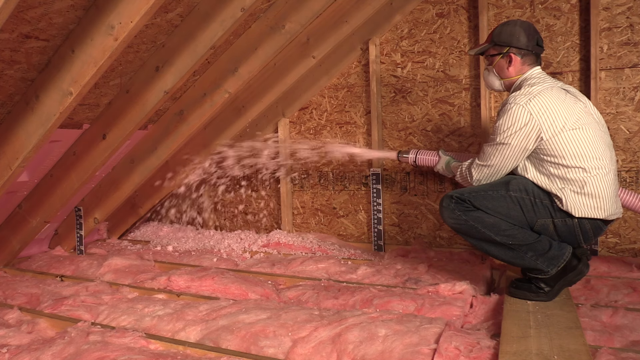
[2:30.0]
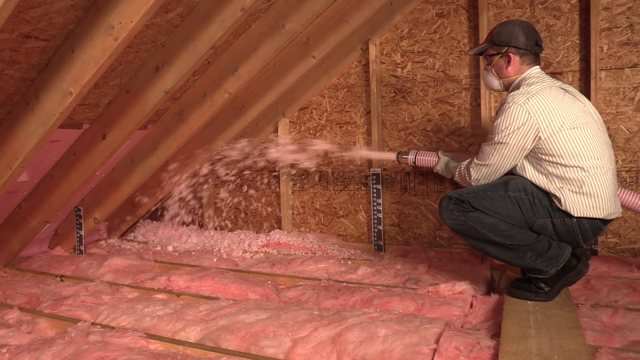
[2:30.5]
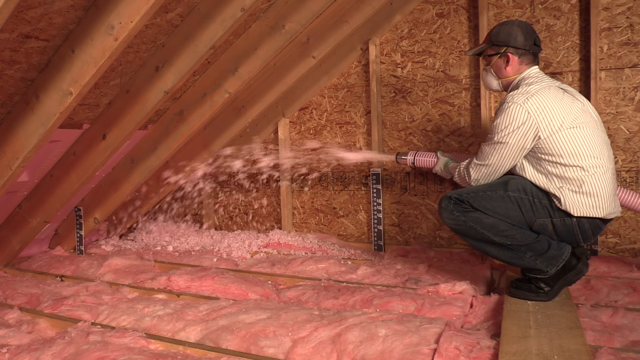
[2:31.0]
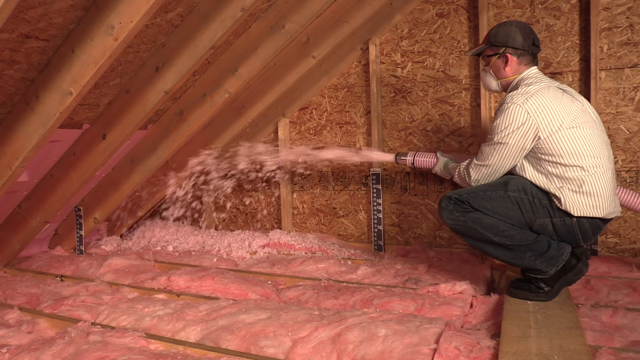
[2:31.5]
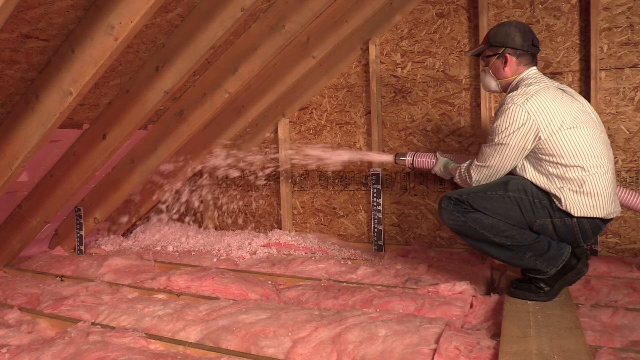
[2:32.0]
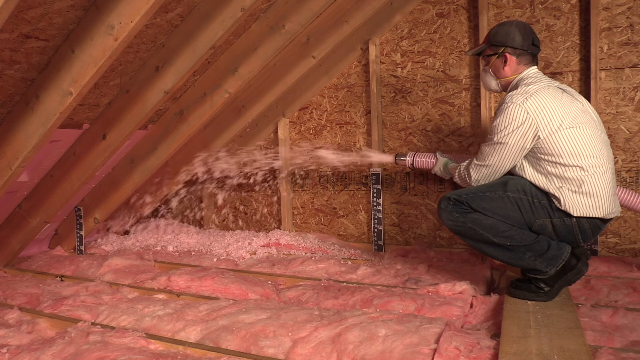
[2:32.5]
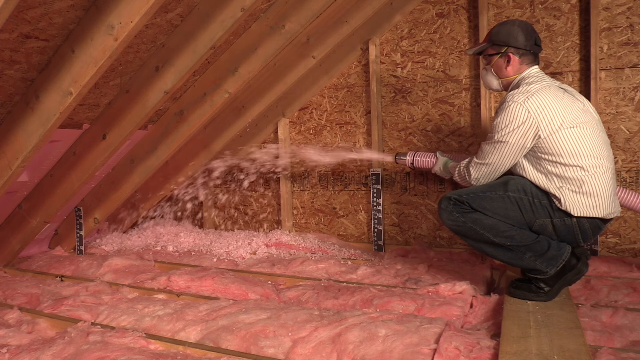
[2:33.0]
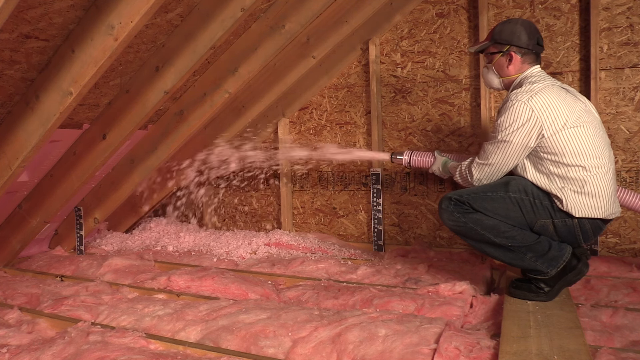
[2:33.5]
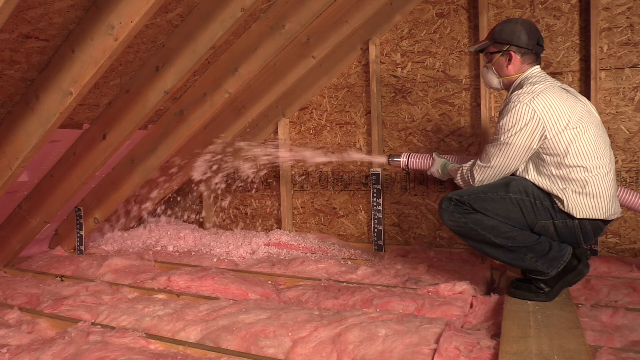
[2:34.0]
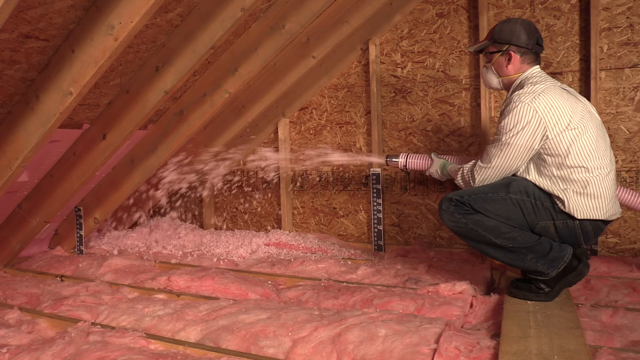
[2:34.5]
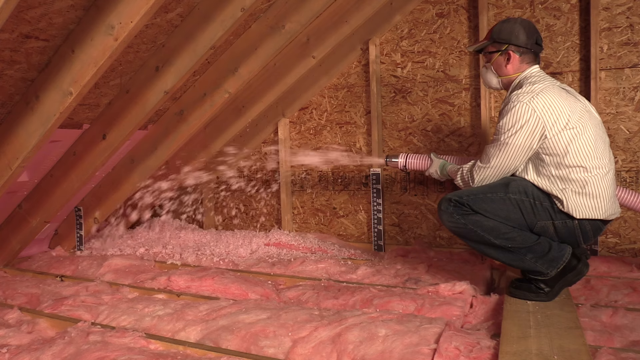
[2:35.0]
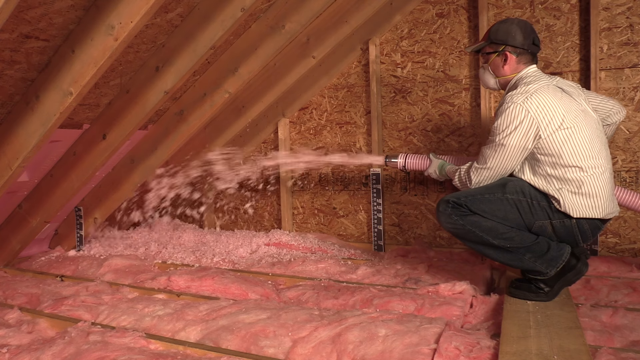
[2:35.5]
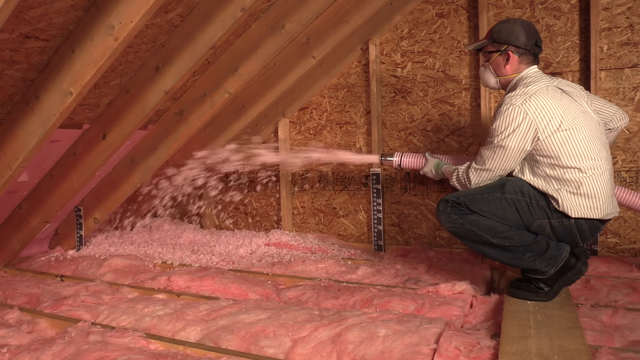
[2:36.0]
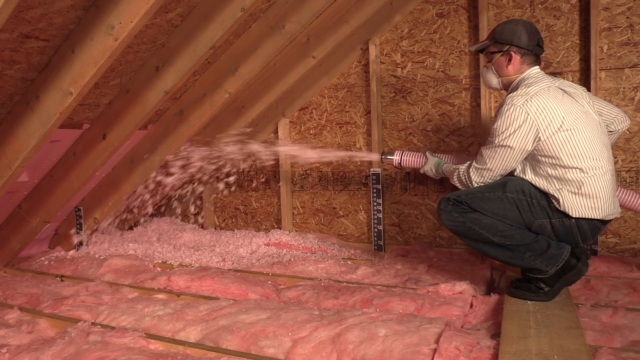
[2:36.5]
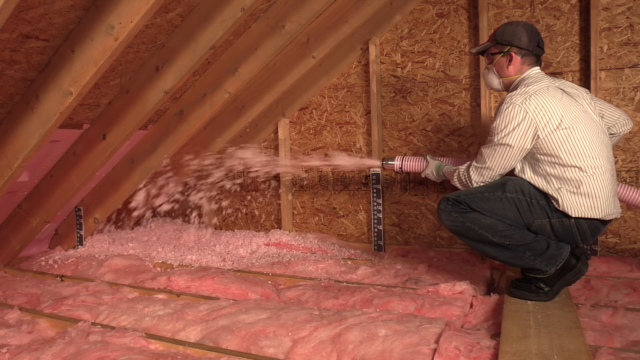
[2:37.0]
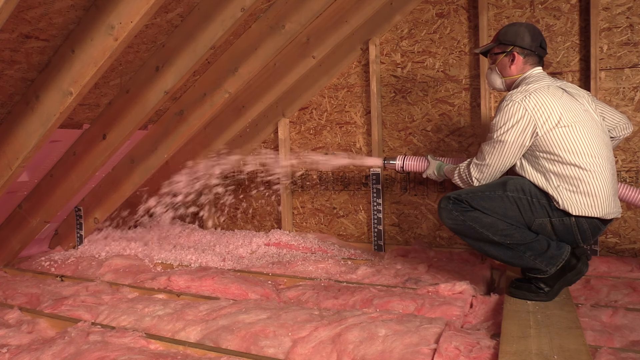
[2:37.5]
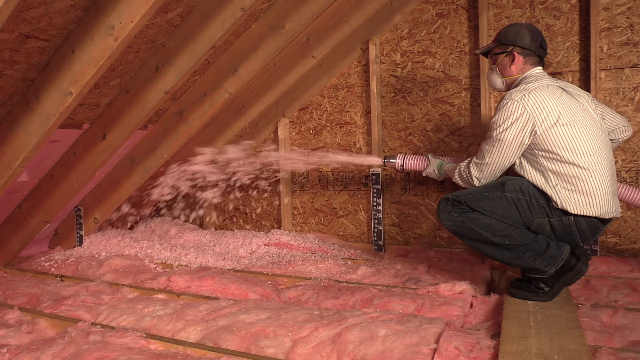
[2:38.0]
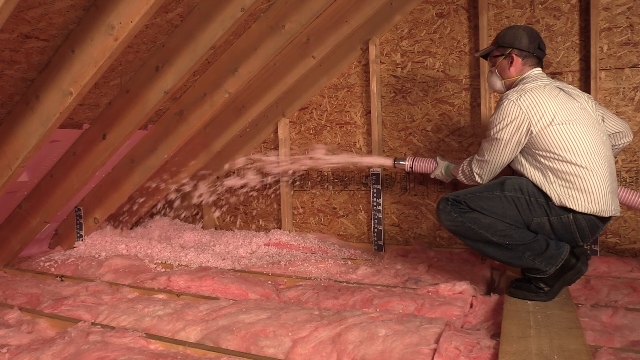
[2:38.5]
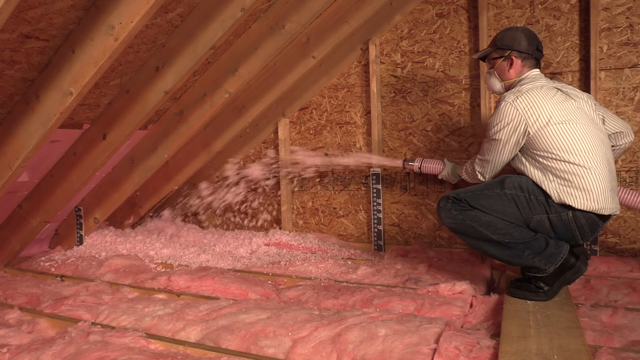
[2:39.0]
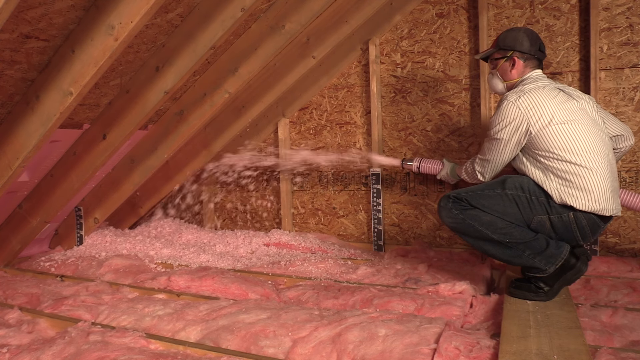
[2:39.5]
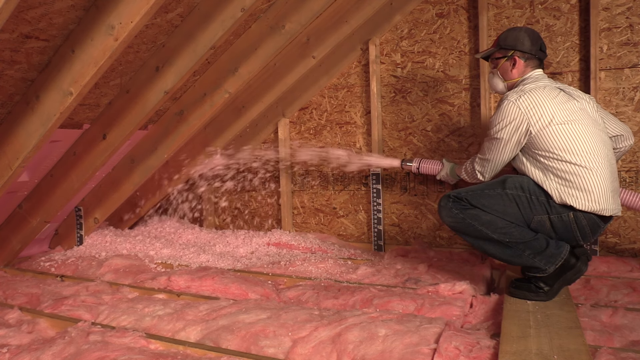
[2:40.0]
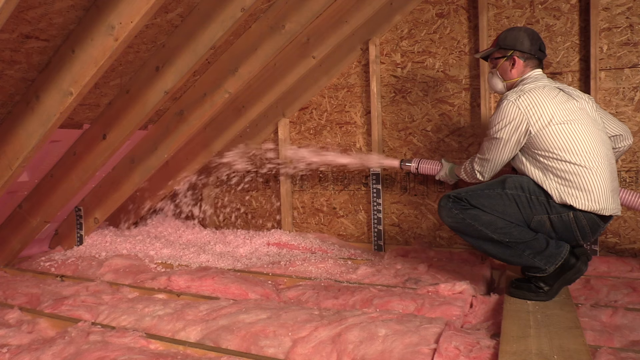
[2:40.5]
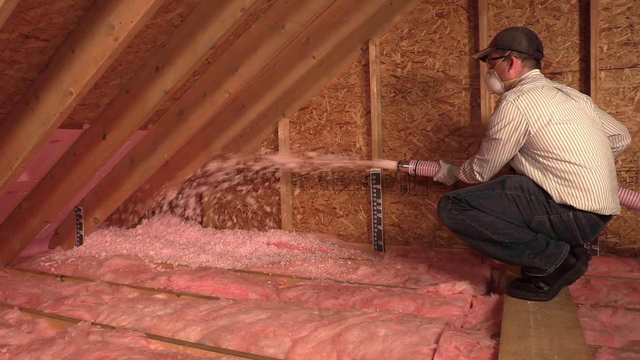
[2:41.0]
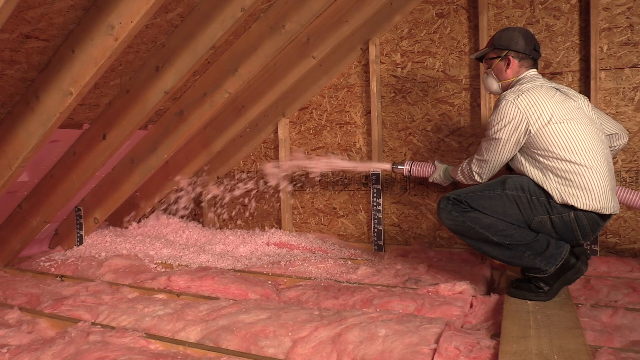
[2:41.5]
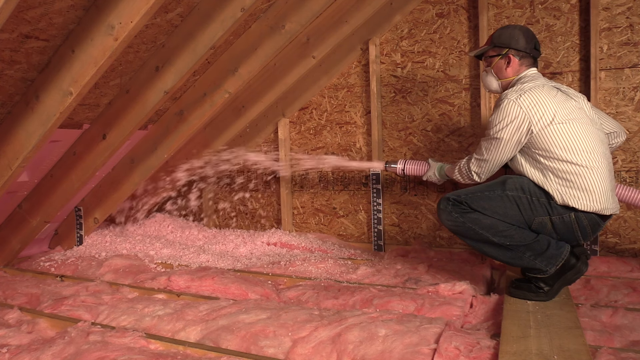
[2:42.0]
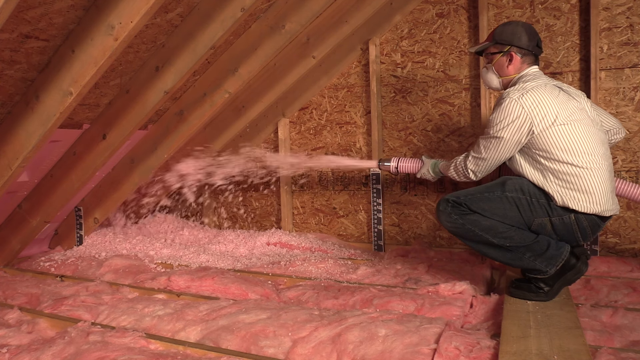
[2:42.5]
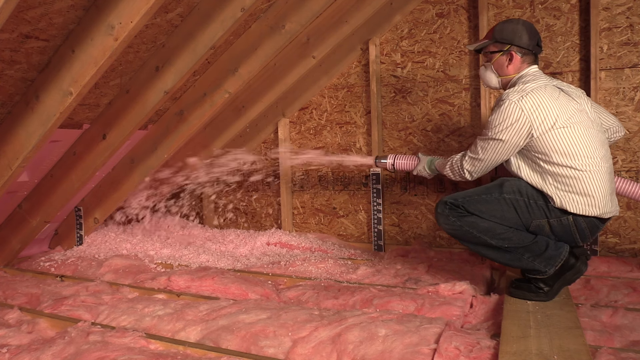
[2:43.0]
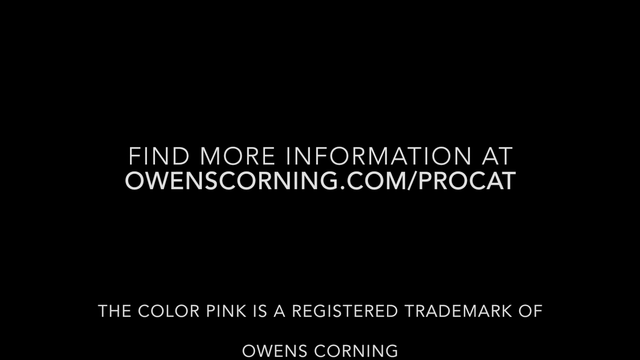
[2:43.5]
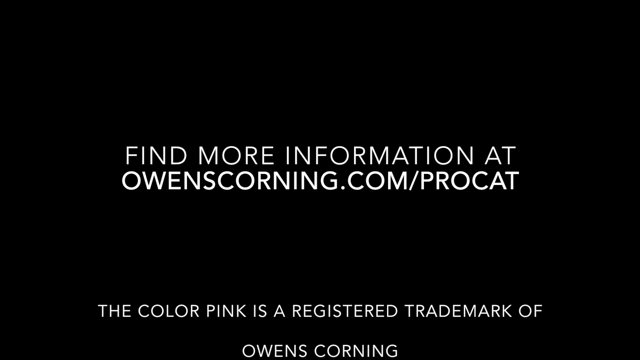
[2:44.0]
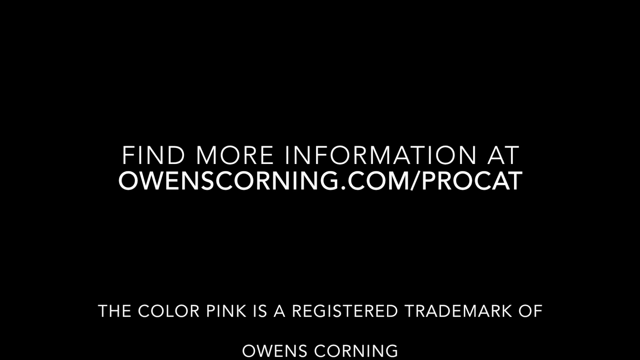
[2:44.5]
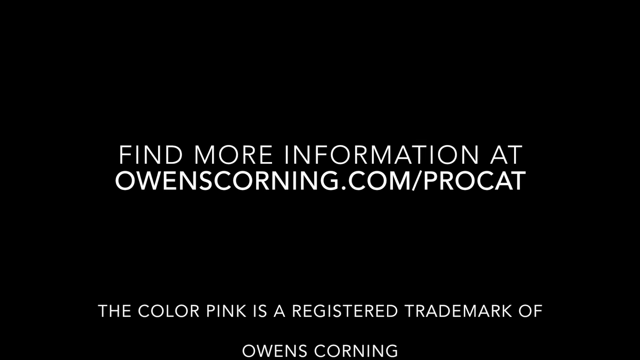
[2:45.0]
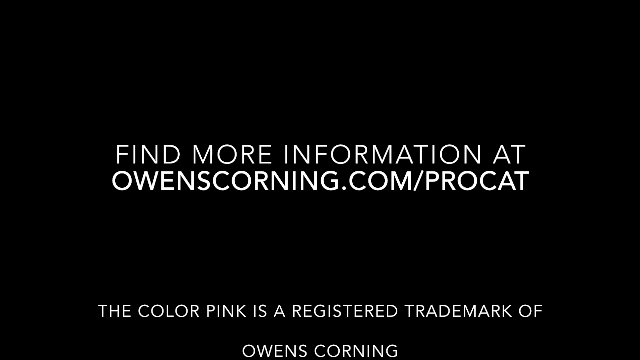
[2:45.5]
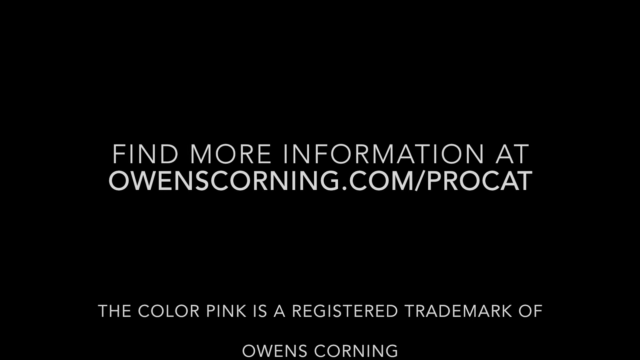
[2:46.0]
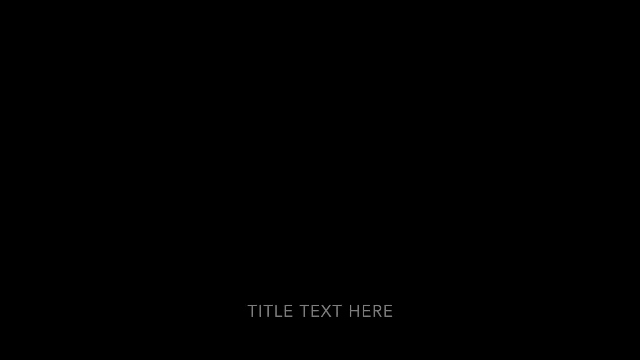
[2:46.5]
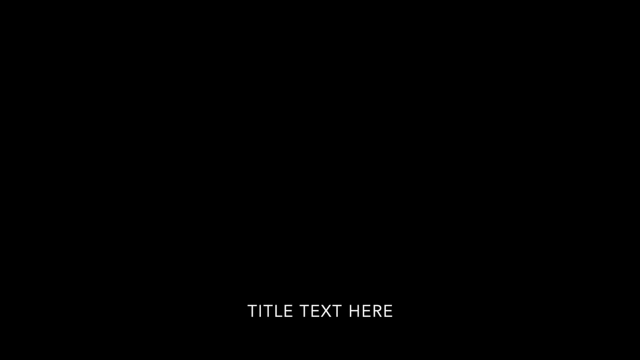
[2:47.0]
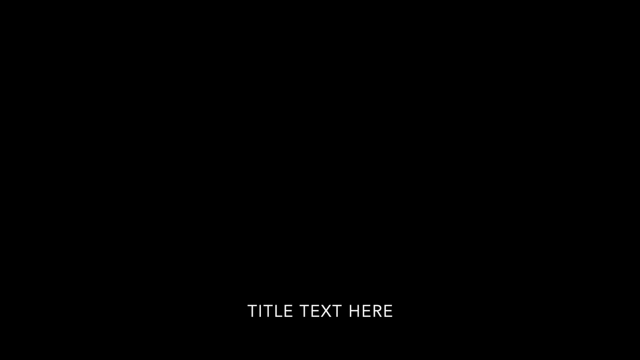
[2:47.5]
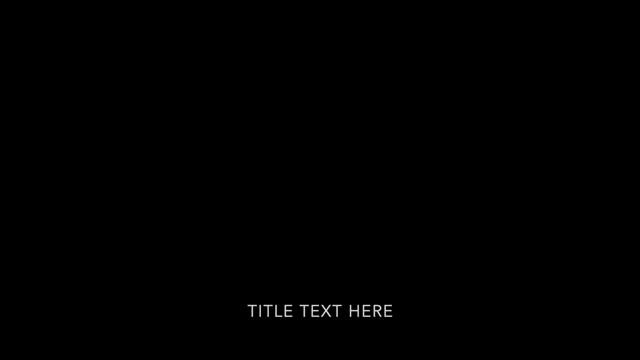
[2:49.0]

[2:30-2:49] A man works inside an attic with a particle board wall behind him. His left side is visible as he crouches on a plank, aiming a pink hose toward the left of the screen and the angled interior of the roof, squirting pink insulation or some pink material toward that left-hand wall. On the slanted interior of the roof on the left, the pink material he stapled between the boards is visible, reaching about maybe three or four feet up from the attic floor rather than all the way to the peak. A black and white measuring paper is stapled to the wall behind him on his right. The scene then changes to a black screen with writing that says "find more information at Owens Corning" and "owenscorning.com.procat".